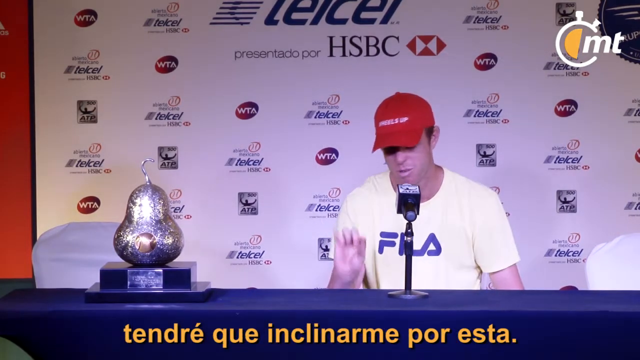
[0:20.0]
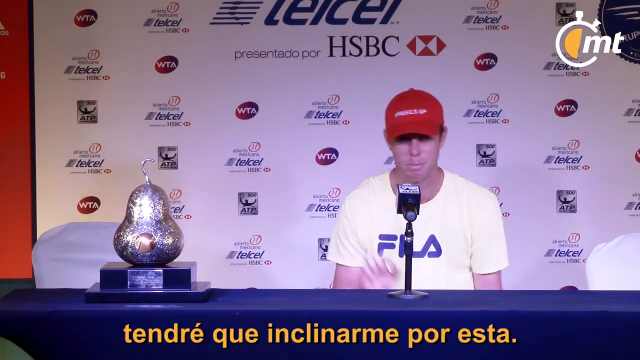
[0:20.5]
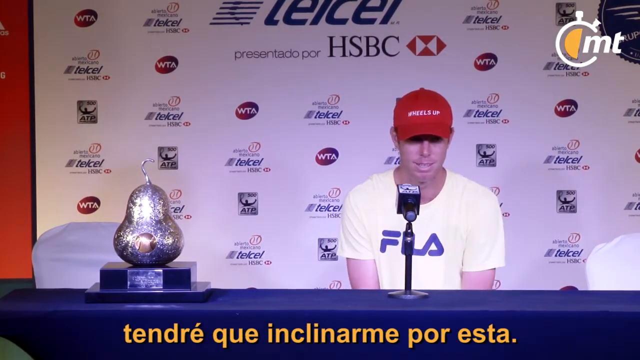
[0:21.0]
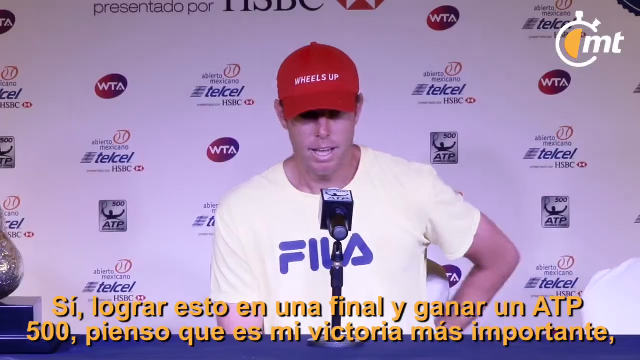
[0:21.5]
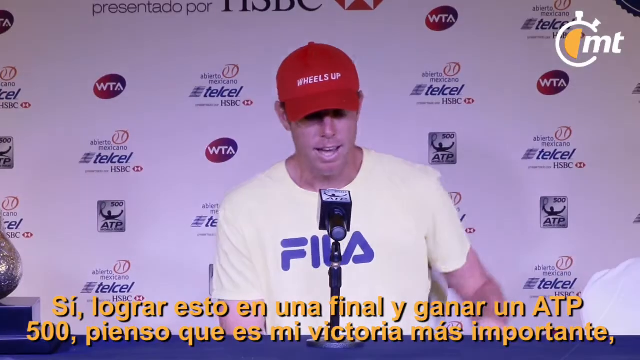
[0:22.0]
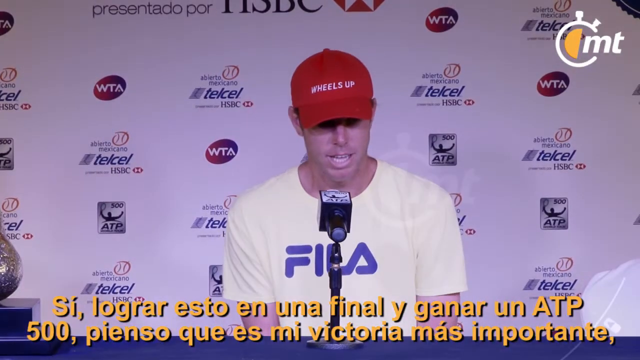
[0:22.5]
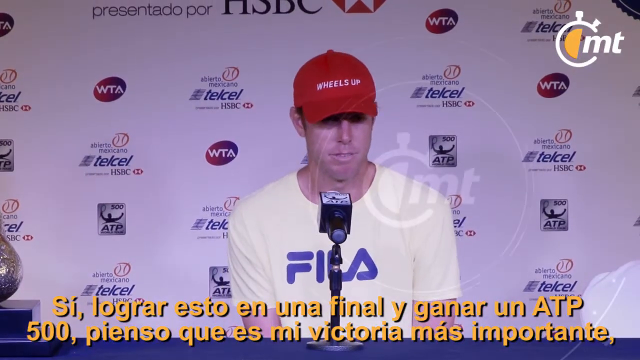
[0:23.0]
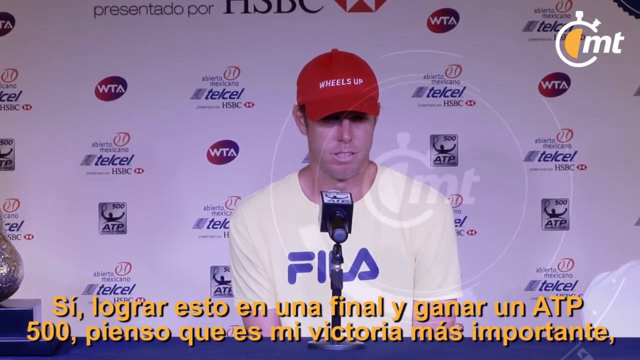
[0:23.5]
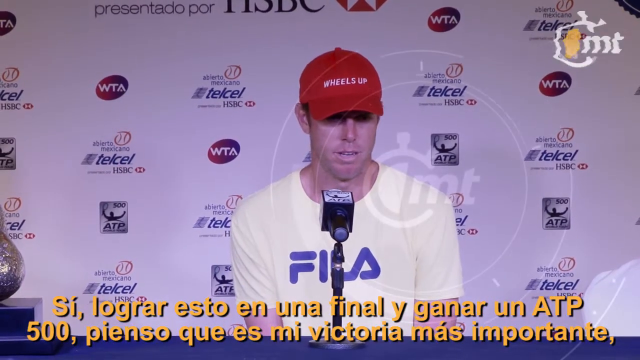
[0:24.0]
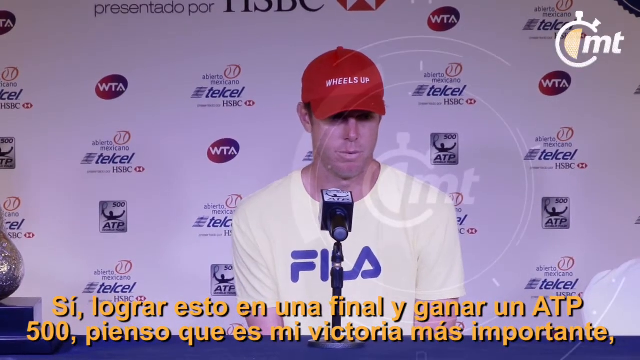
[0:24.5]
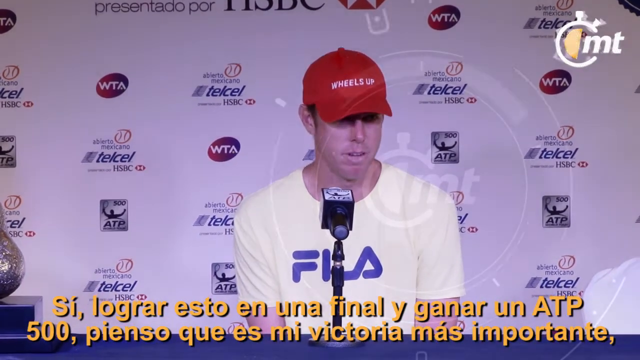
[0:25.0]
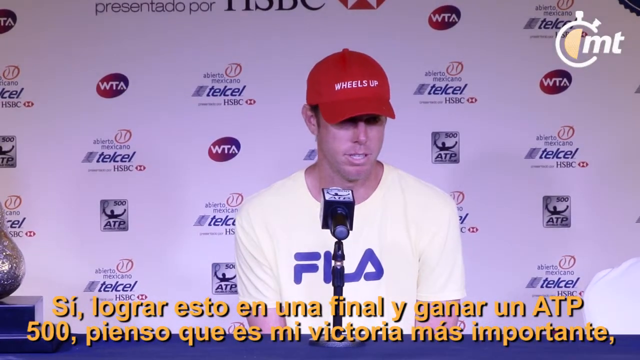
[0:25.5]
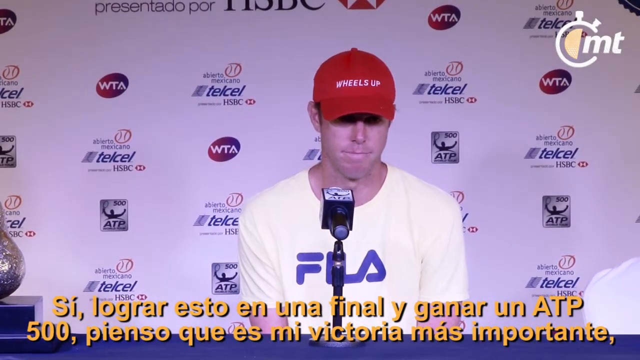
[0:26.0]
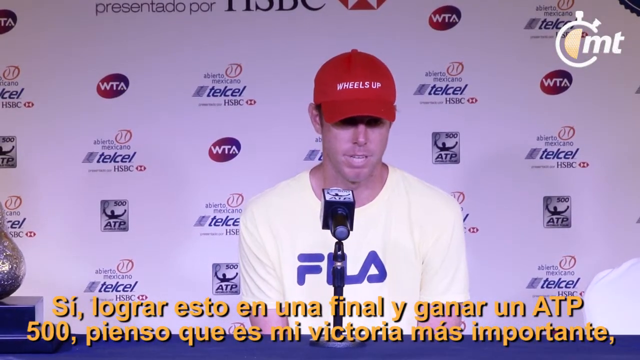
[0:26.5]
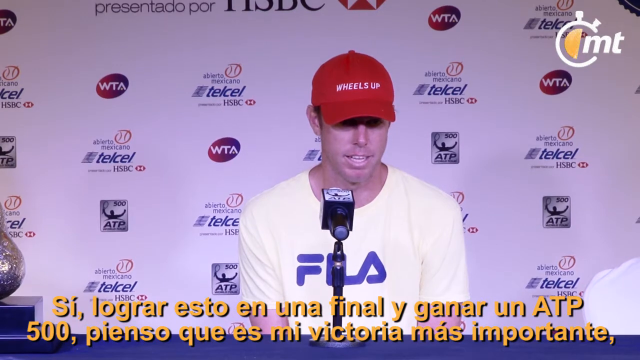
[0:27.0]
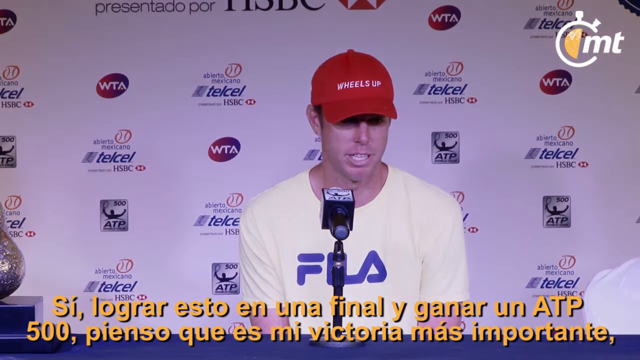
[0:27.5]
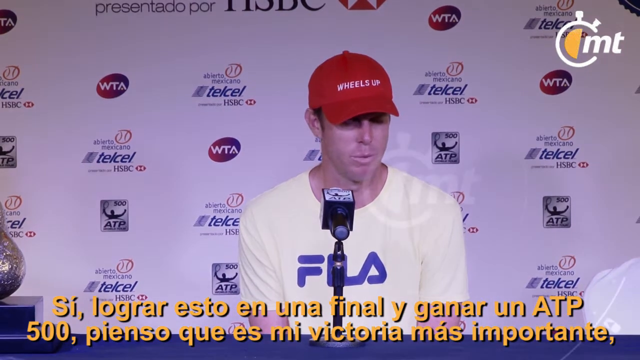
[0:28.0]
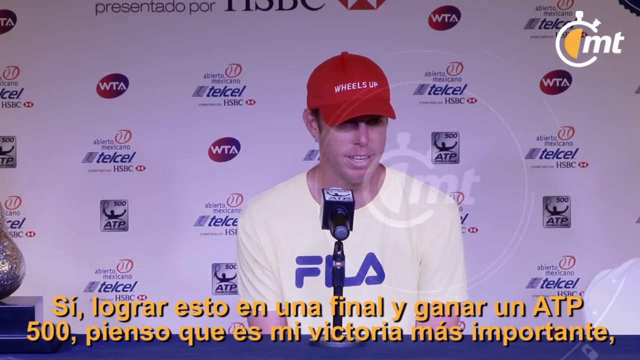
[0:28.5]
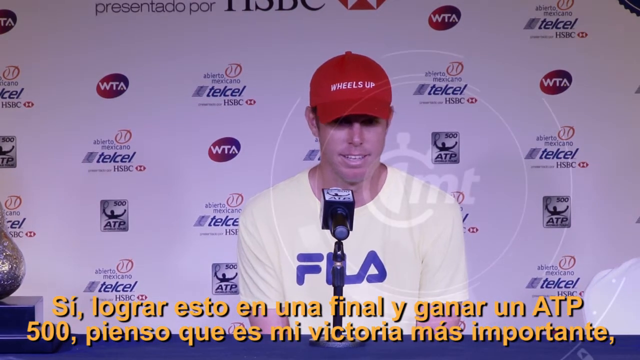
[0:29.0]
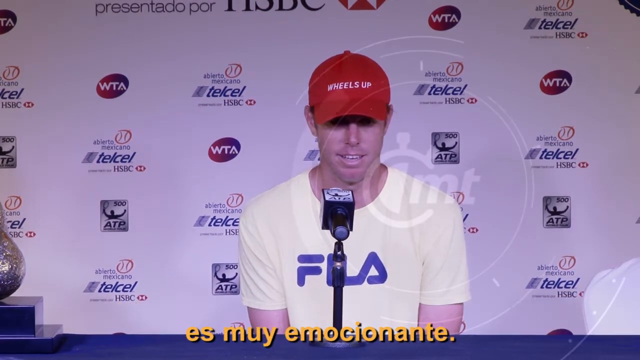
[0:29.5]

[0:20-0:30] A young man sits in front of a microphone at a blue table. He wears a red hat that says "Wheels Up" and a white t-shirt with a blue "Fila". A "CMT" watermark is in the upper right-hand corner, its C looking like a stopwatch. Behind him are "HSBC", "WTA" and "ATP", indicating professional tennis.